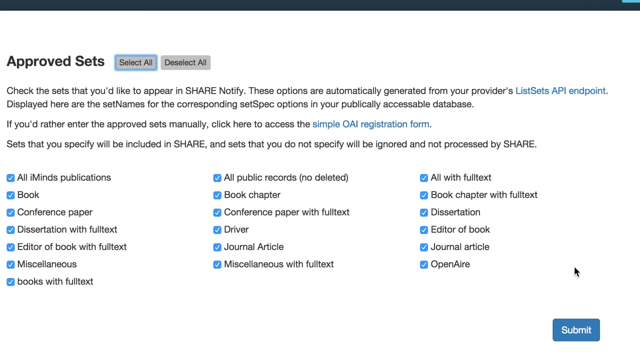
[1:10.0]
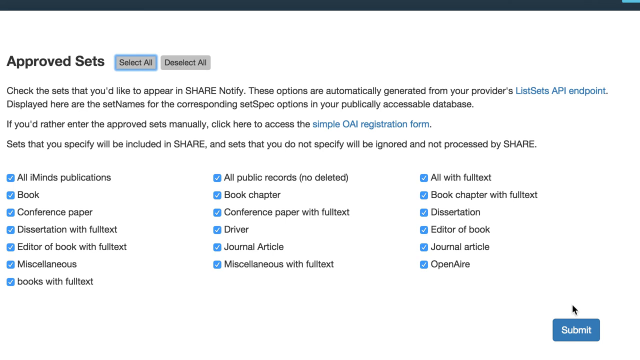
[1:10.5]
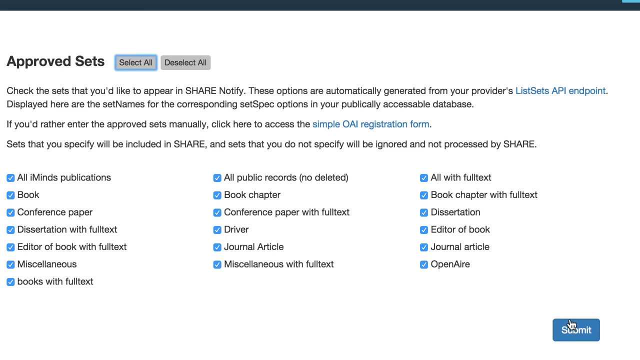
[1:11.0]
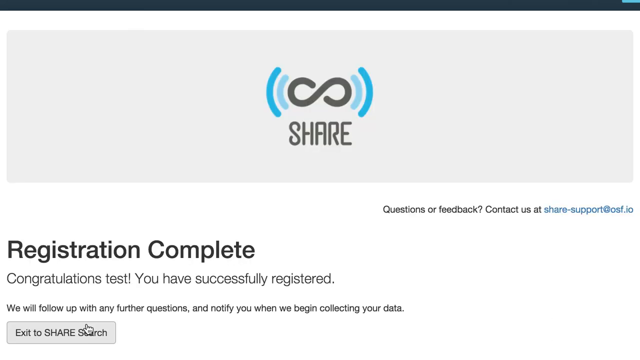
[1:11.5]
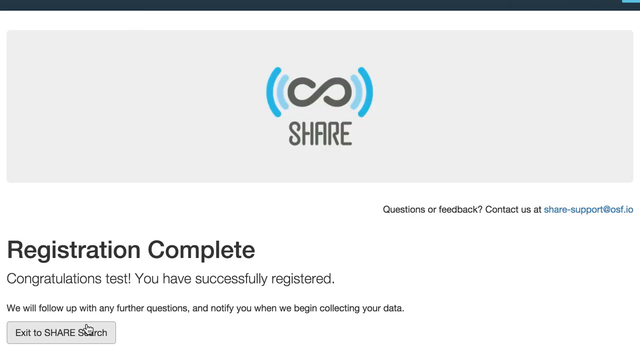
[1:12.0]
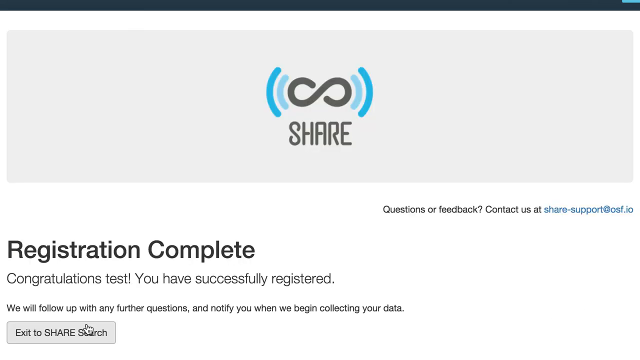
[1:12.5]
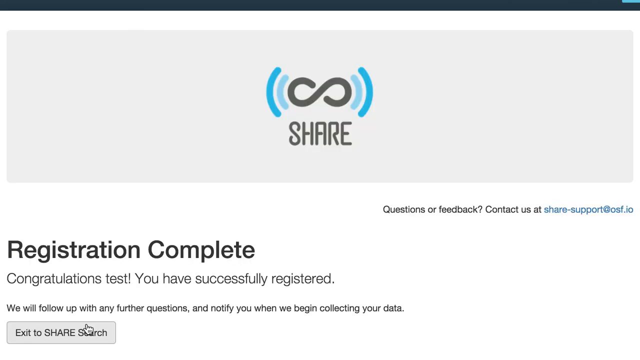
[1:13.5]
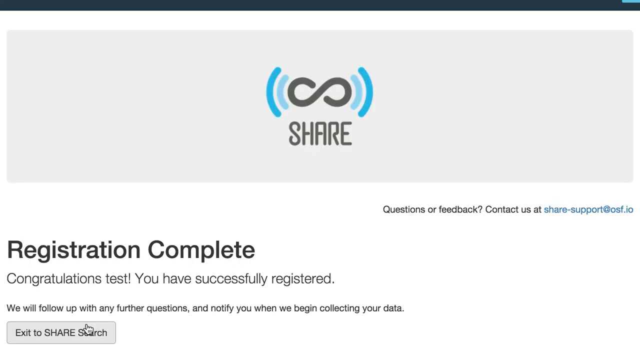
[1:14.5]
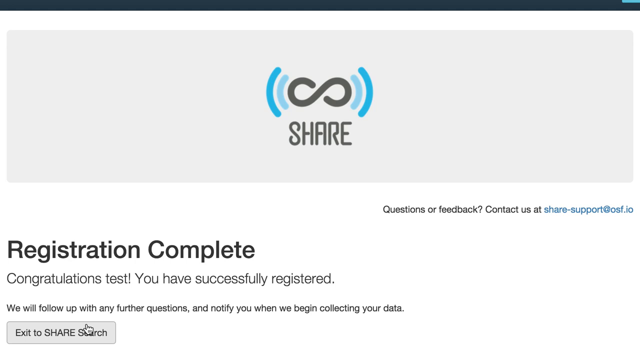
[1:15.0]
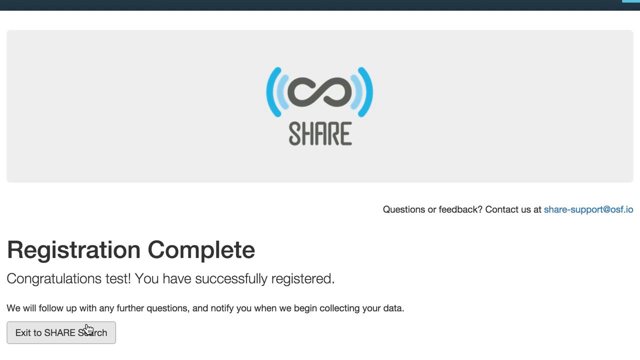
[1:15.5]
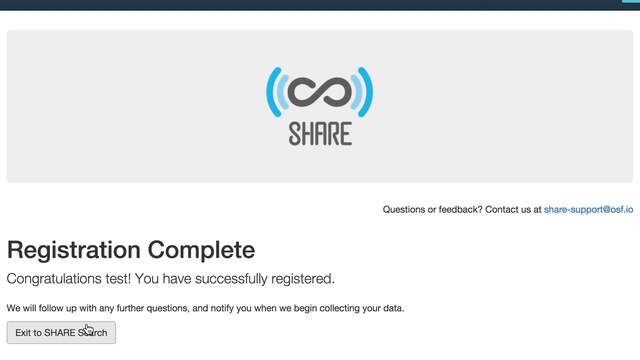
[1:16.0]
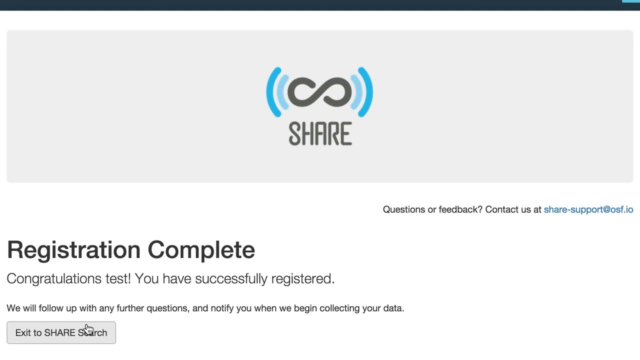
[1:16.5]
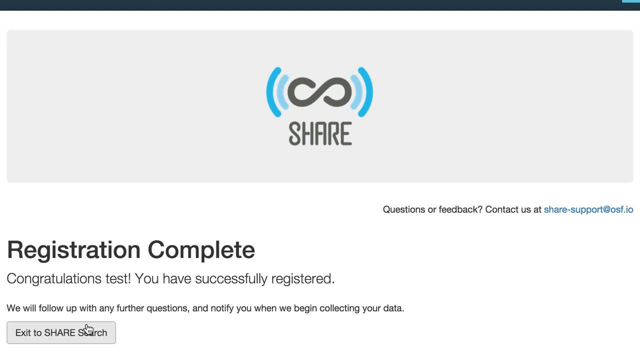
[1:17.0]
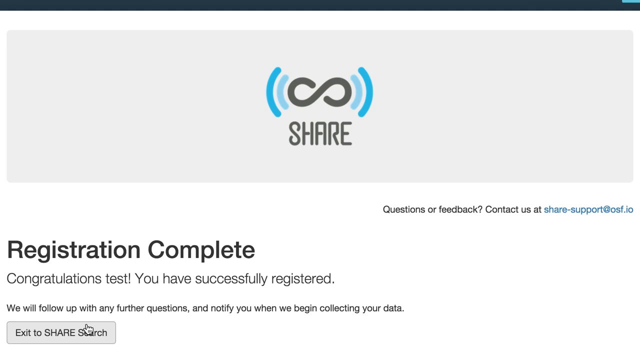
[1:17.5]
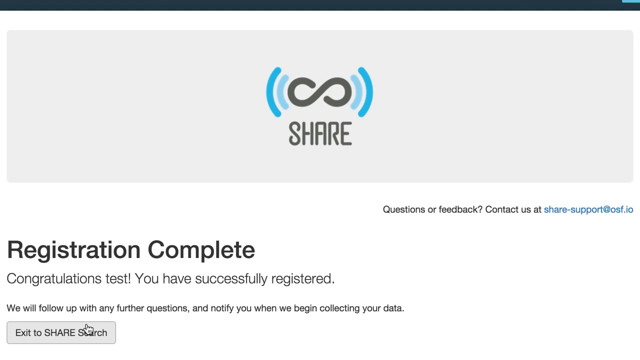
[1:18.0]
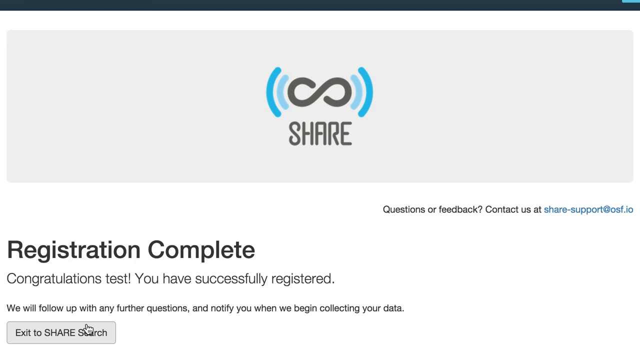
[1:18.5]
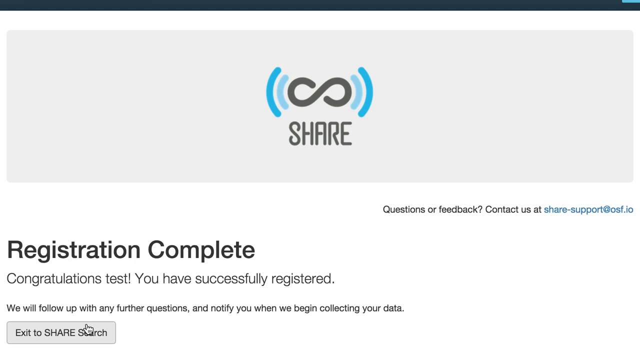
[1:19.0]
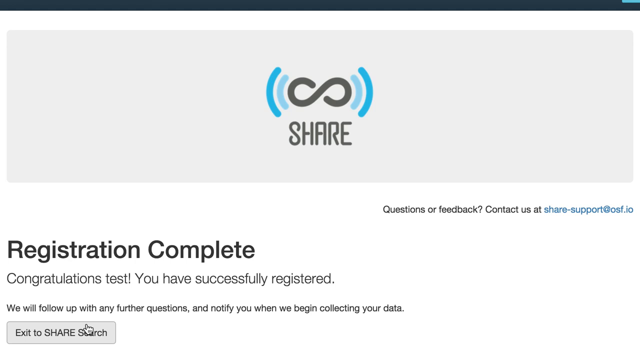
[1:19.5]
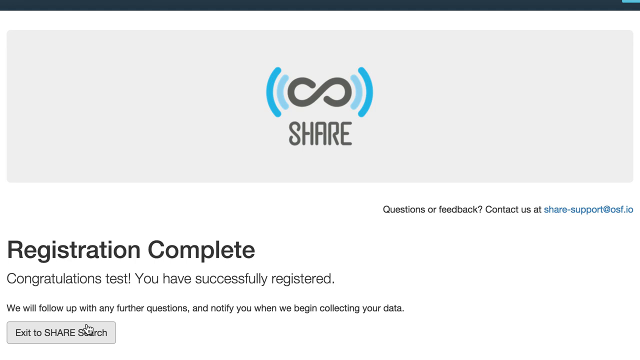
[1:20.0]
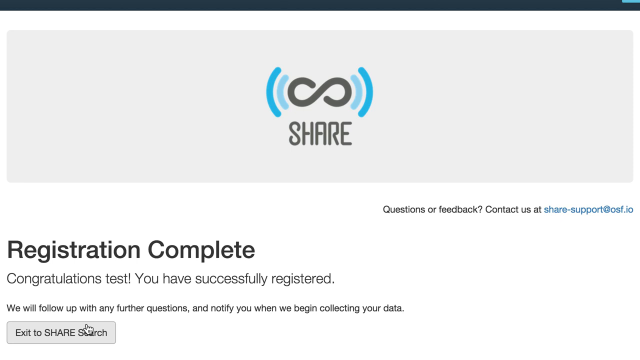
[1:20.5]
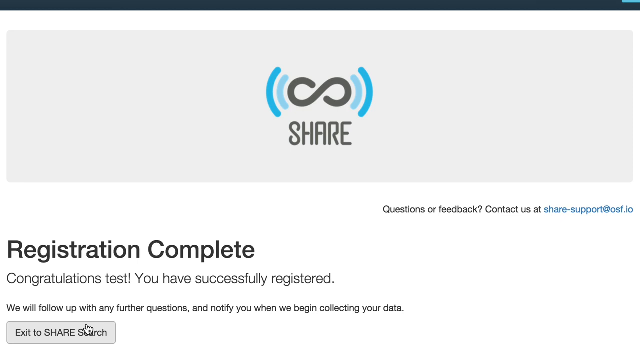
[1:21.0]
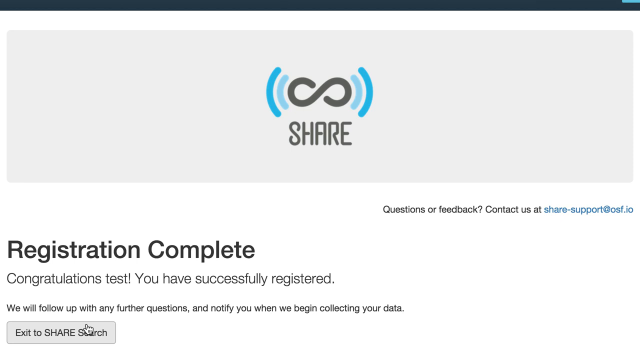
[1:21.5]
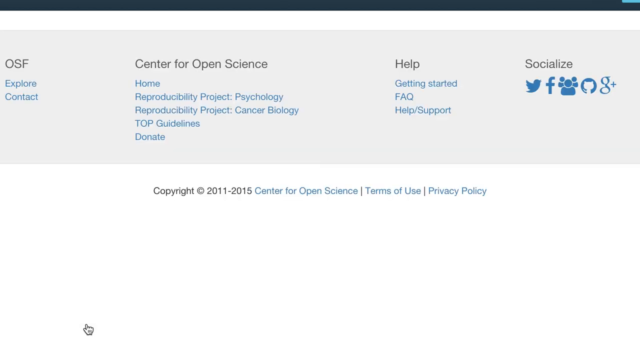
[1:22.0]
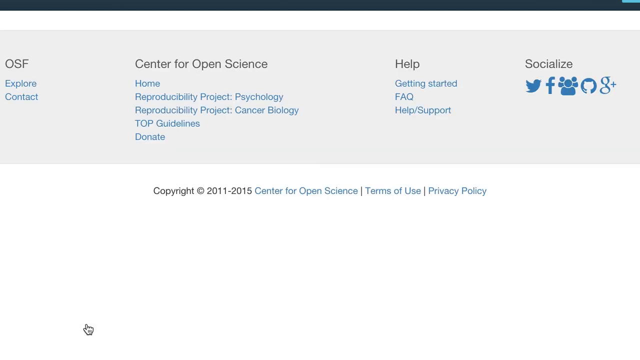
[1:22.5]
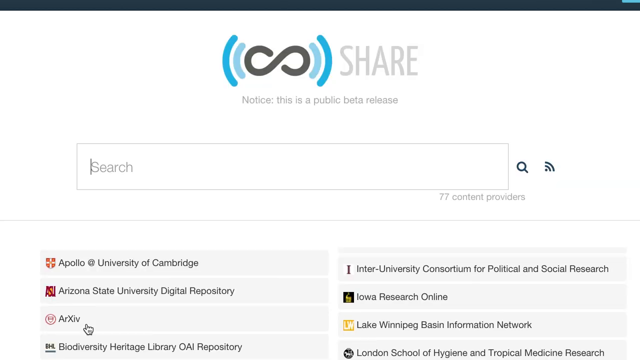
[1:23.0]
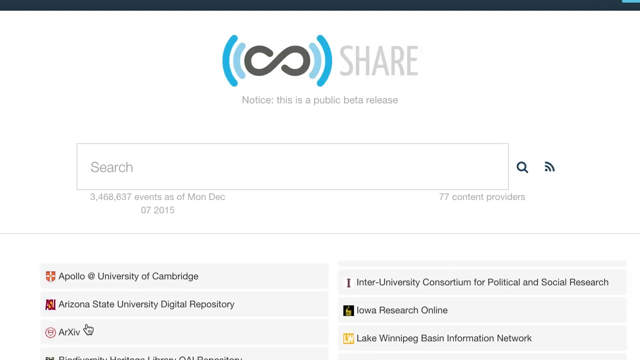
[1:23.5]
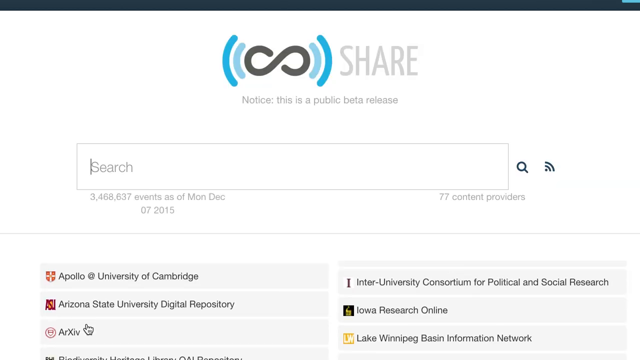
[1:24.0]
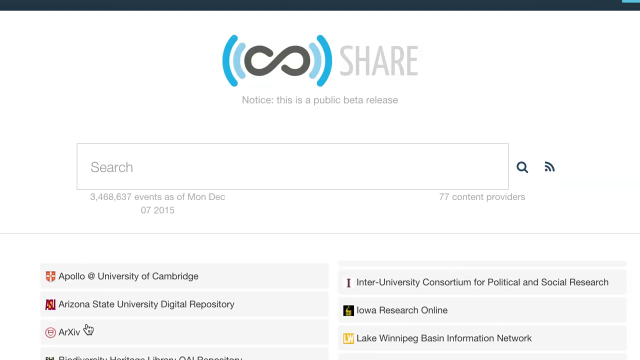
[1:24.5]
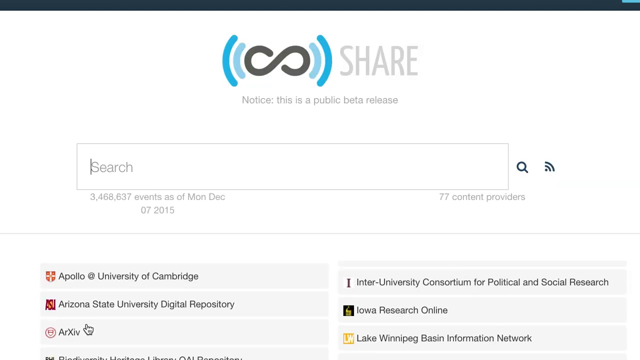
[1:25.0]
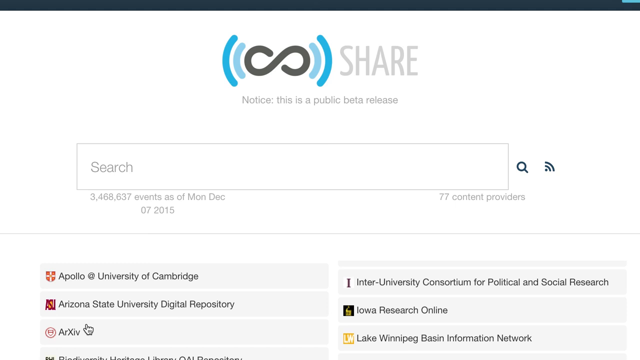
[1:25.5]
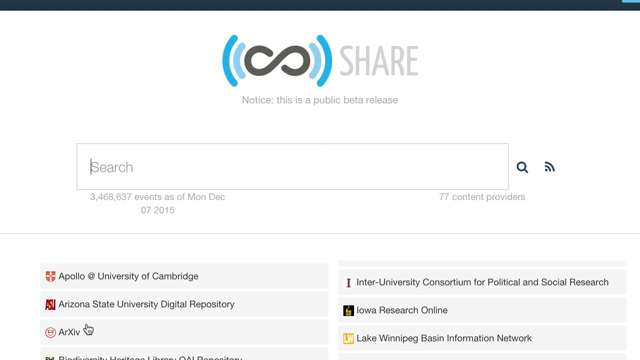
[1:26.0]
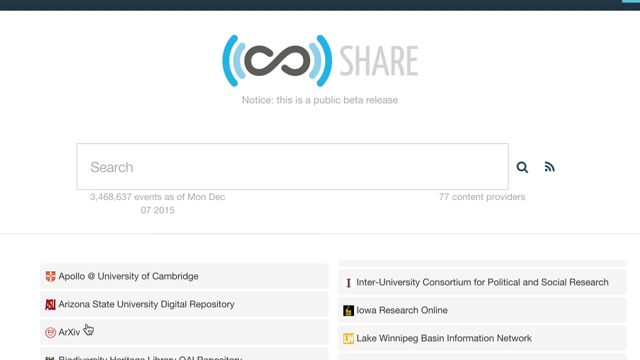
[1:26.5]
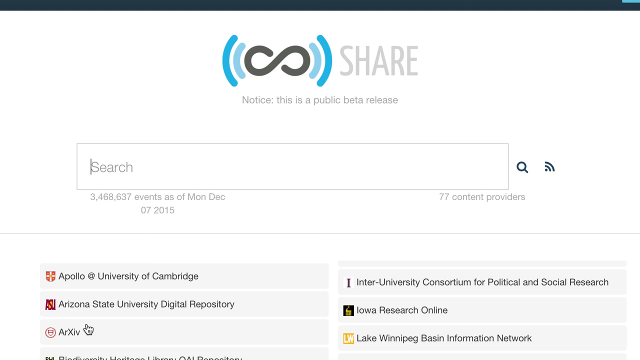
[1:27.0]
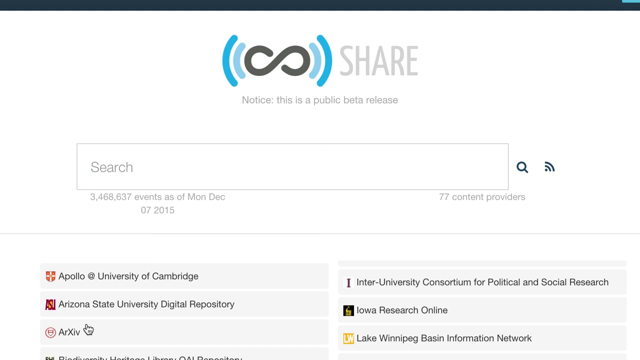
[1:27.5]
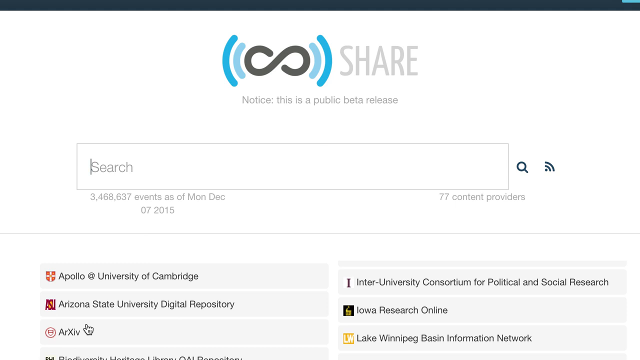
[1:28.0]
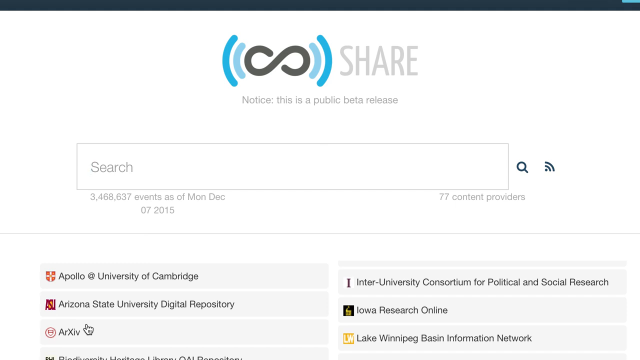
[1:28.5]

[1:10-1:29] A page reads "Your registration is complete. Congratulations test, you have successfully registered. We will follow up with a further question and notify you when you begin the collection of your data." The view leaves that page and goes to the SHARE search option, which shows "3,468,637 events" from content providers that can be searched on the platform. A notice reads "this is a public beta release." Scrolling through the page shows each section step by step, with the text written clearly and boldly.